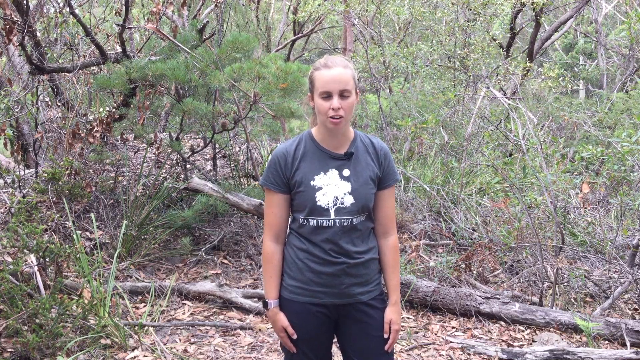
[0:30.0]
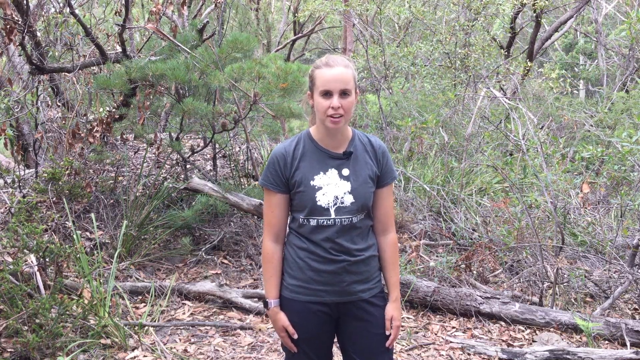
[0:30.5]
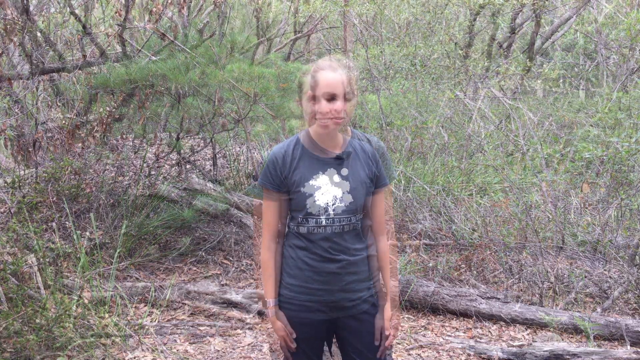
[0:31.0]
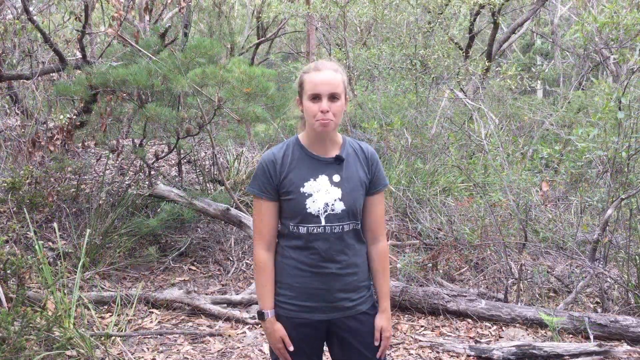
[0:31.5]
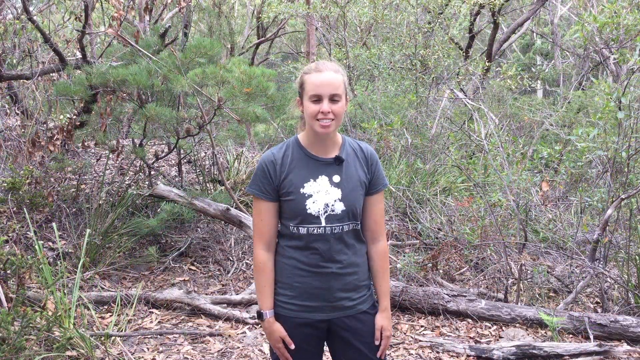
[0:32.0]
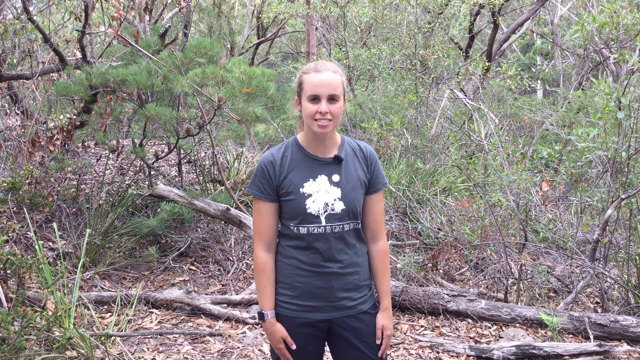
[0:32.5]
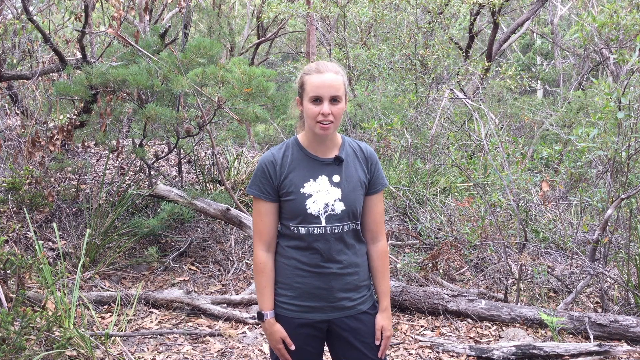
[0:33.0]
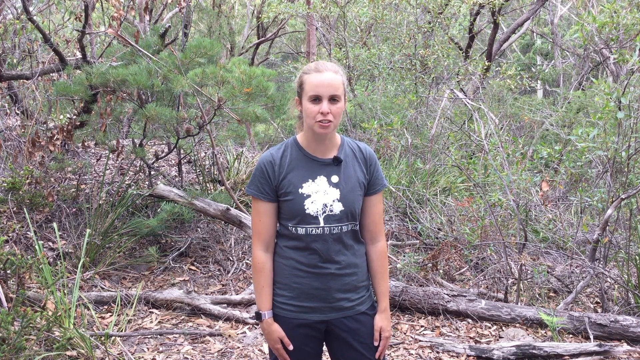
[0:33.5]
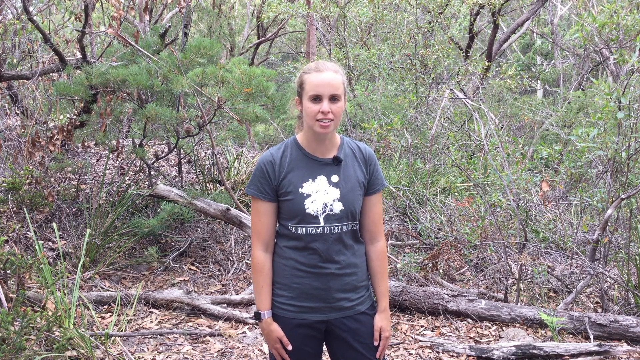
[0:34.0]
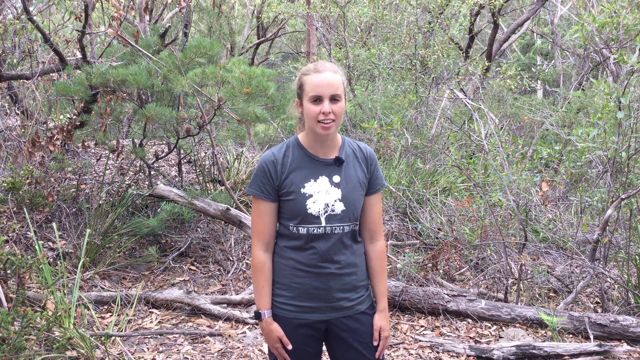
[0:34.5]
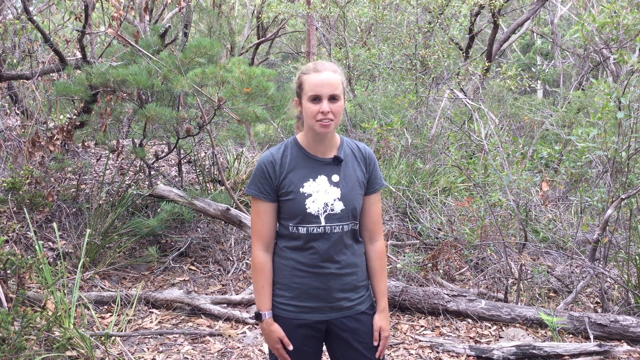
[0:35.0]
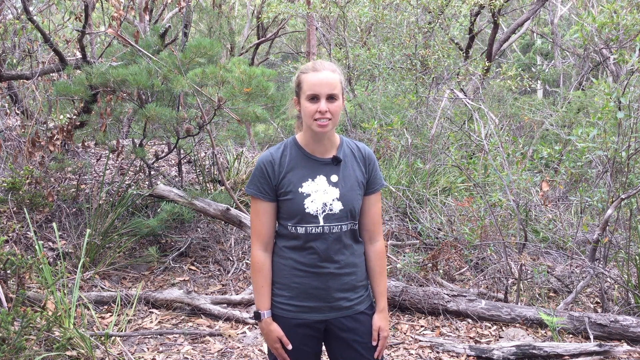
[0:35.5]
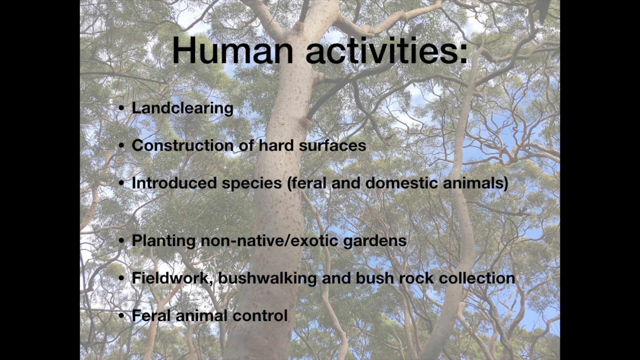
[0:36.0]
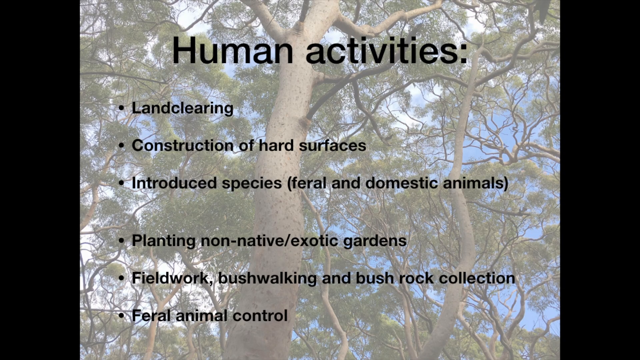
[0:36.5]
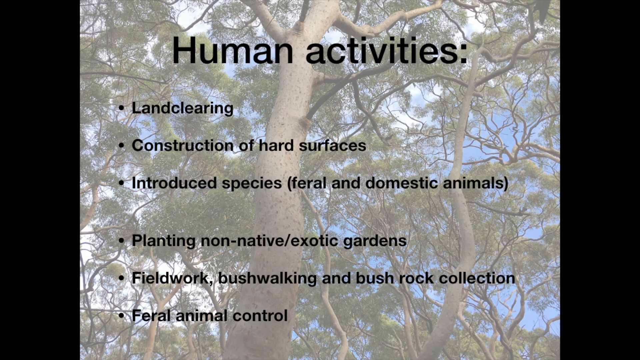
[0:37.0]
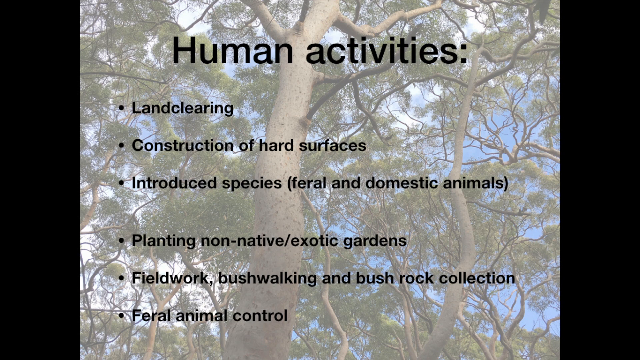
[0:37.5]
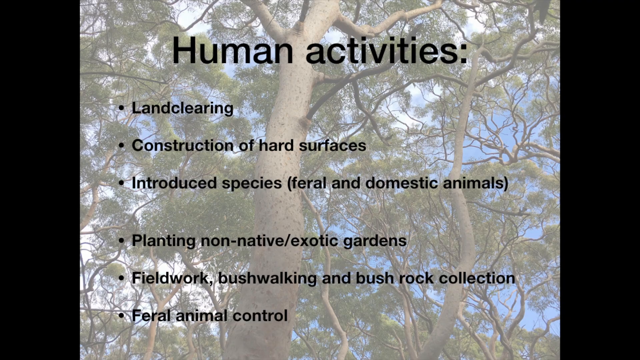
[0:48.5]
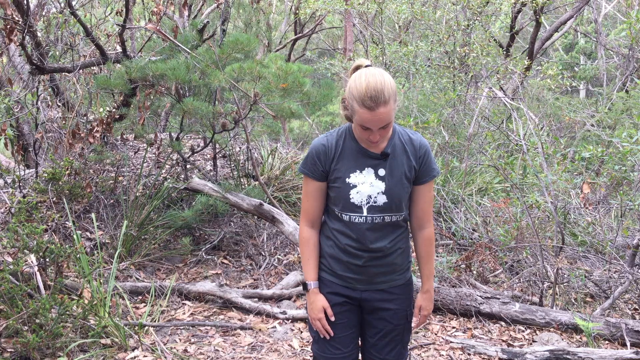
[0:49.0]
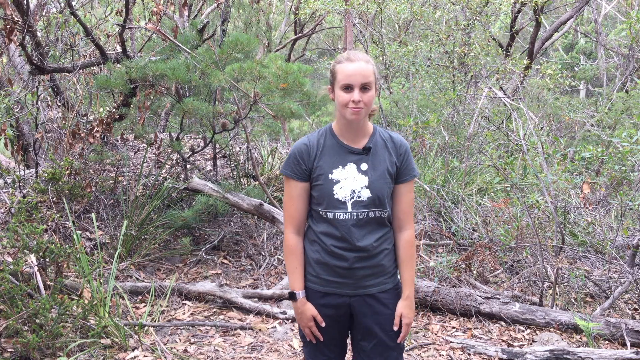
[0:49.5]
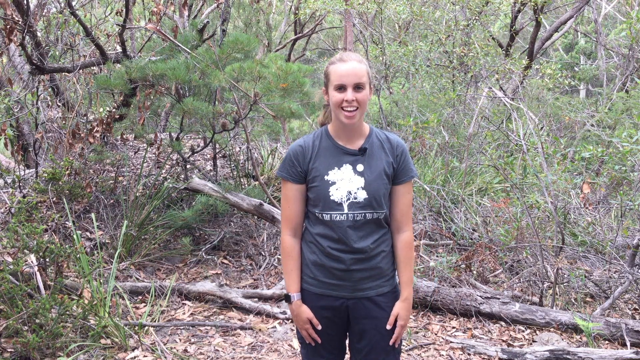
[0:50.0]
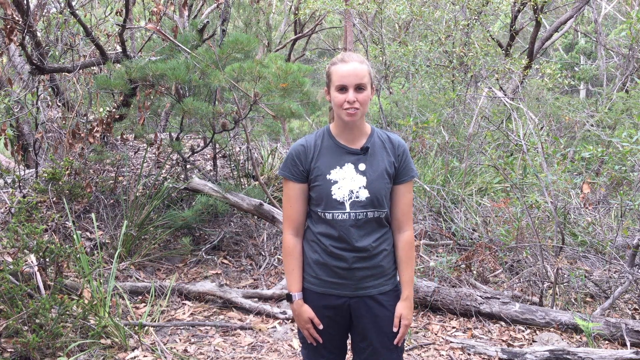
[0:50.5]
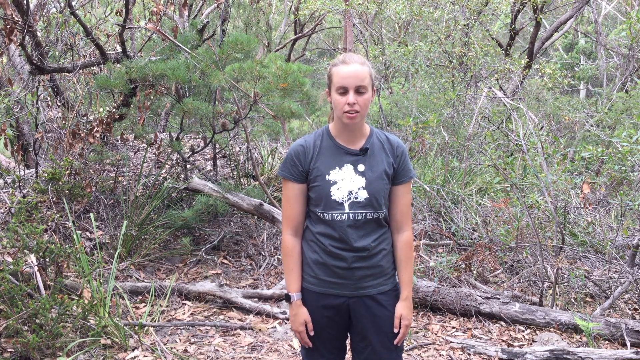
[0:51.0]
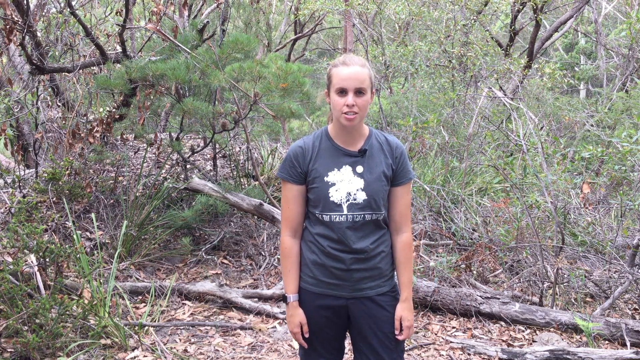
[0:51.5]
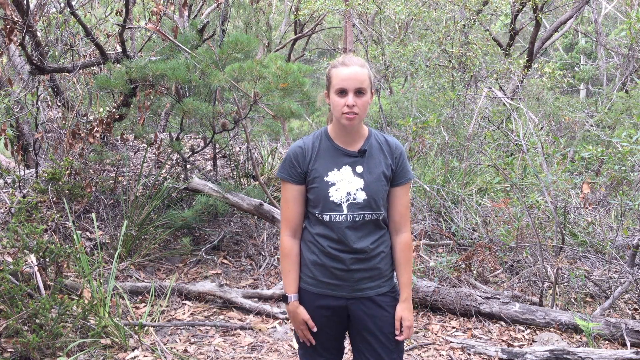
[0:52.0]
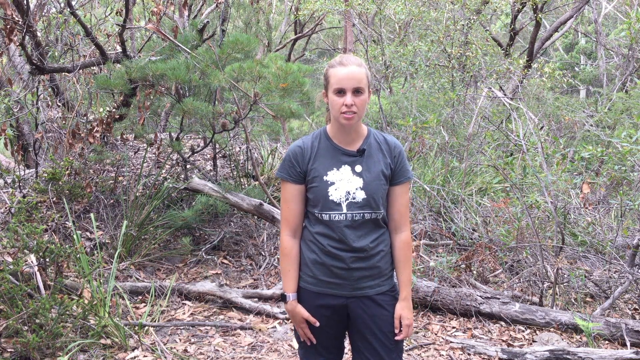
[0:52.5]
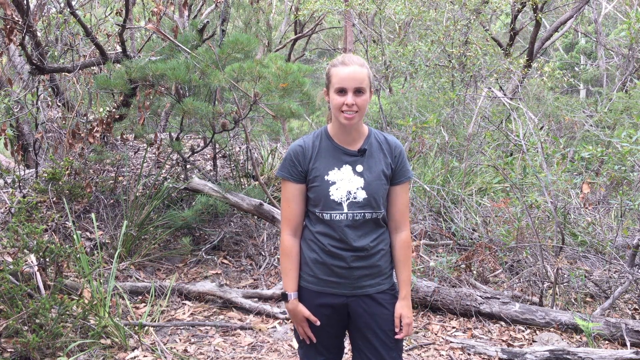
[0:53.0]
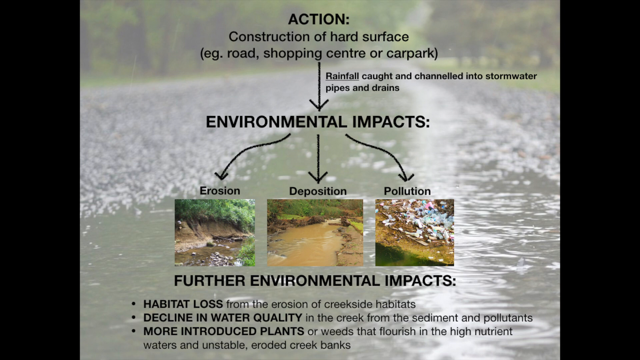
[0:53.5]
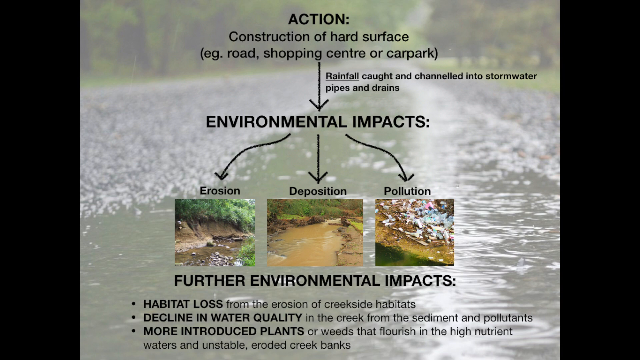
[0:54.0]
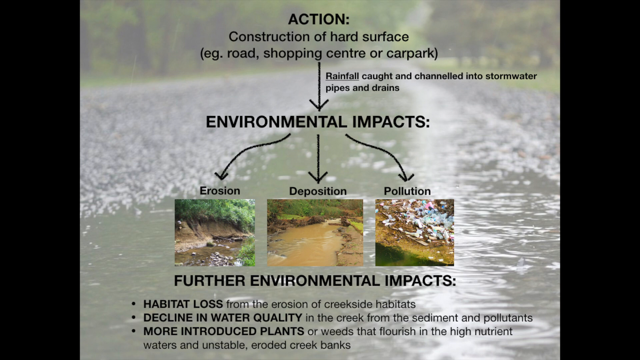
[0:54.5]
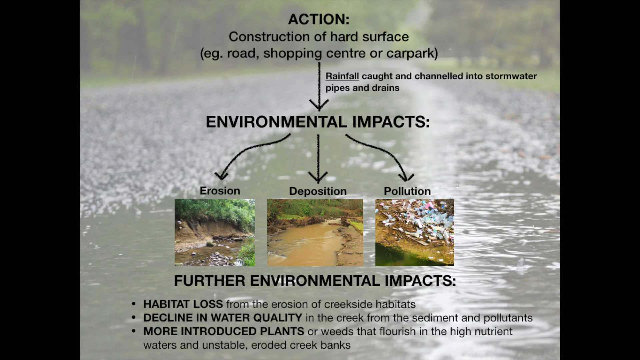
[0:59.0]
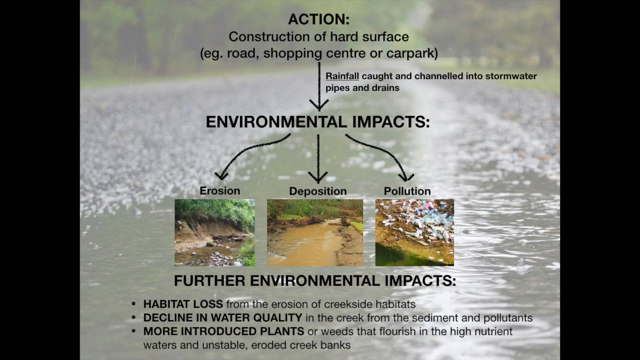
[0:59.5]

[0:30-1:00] The woman faces the camera and talks. The scene then changes to a photograph of some trees with quite twisty branches against a blue sky. In the centre of the screen, in black letters, is the header "Human activities" followed by a bullet-pointed list: "land clearing", "construction of hard surfaces", "introduced species (feral and domestic animals)", "planting non-native/exotic garden", "fieldwork, bushwalking and bush rock collection" and "feral animal control". The video stays on this screen for quite some time. It then switches back to the woman, who looks slightly caught unawares as she looks down at first, then stands upright again in a slightly unnatural pose and smiles as she begins talking. Next comes an image of what appears to be a road with rainwater on it; in the centre there seems to be text about the environmental impact of hard surfaces such as car parks and roads, and that they can cause erosion, deposition and pollution.